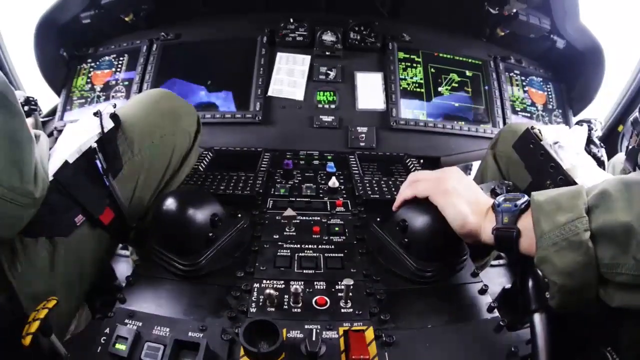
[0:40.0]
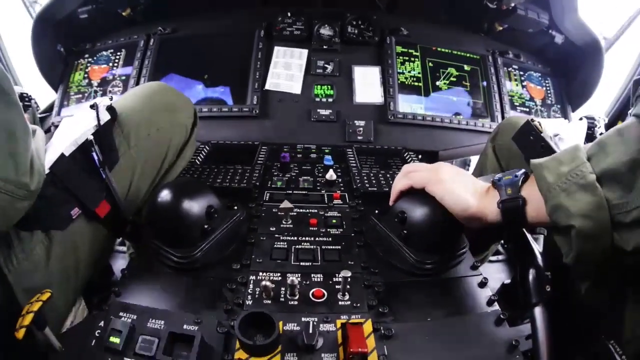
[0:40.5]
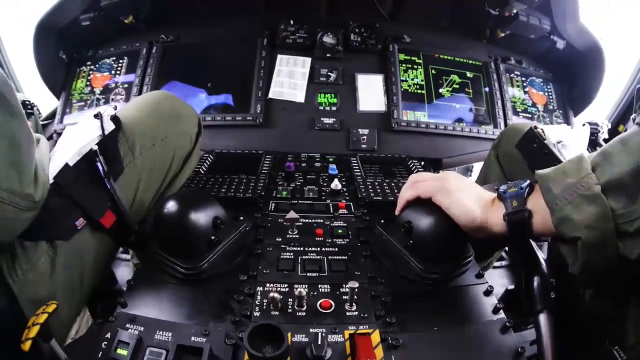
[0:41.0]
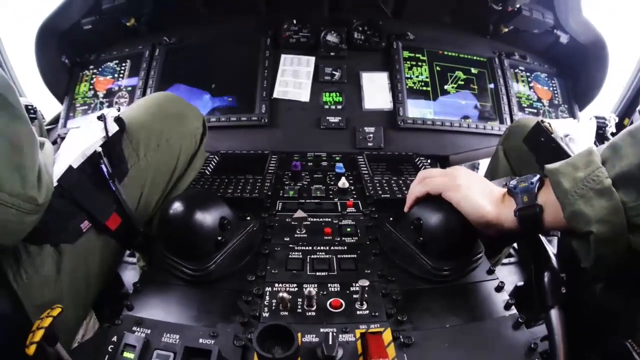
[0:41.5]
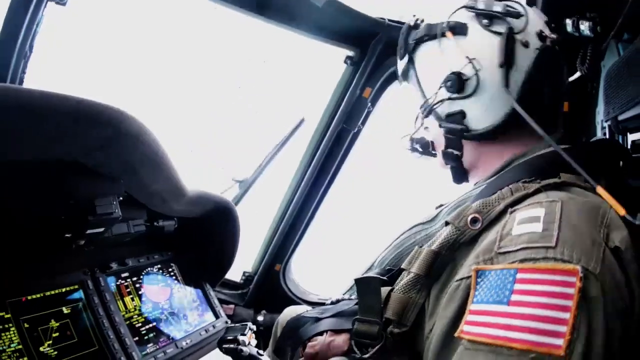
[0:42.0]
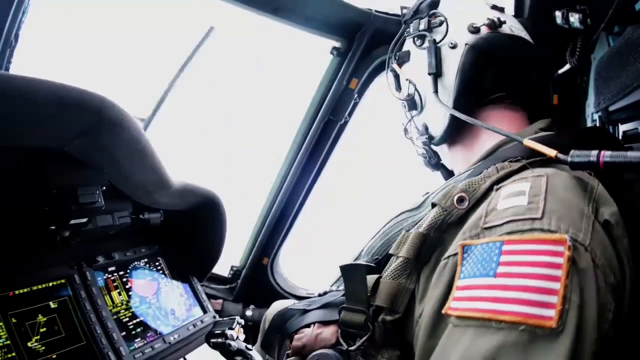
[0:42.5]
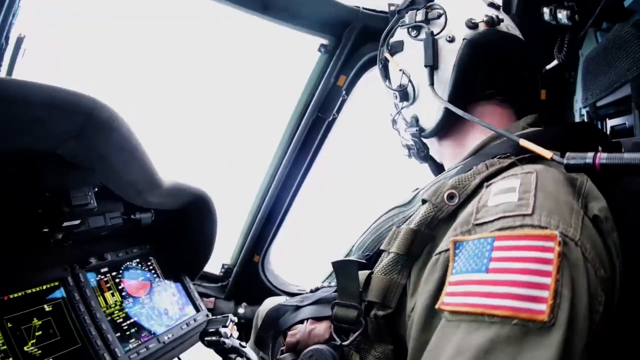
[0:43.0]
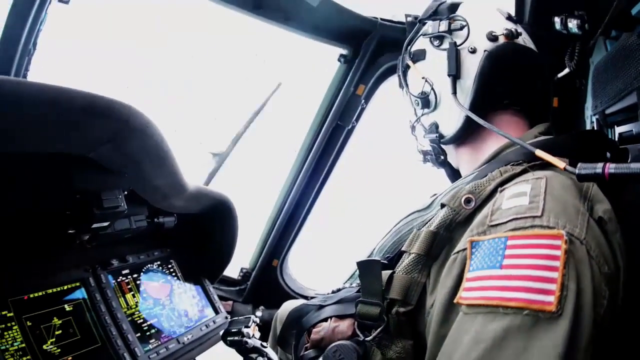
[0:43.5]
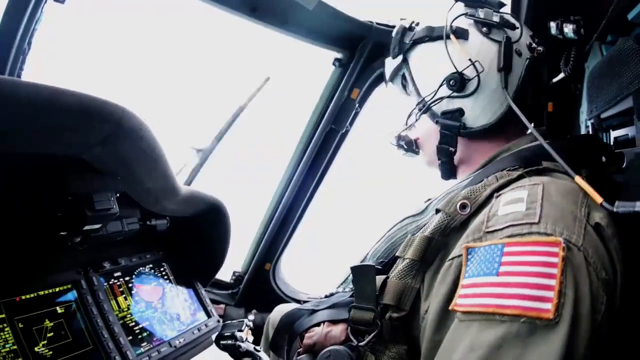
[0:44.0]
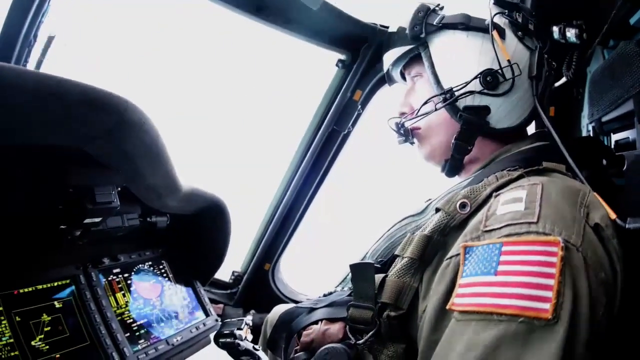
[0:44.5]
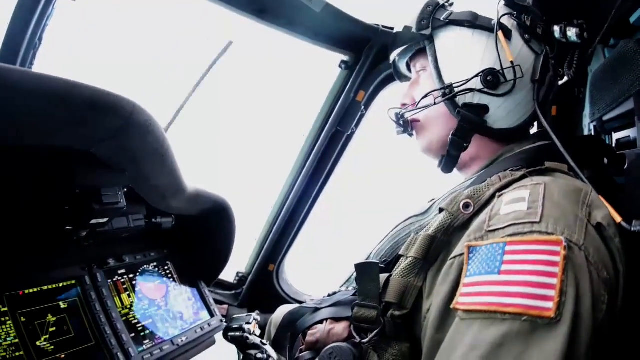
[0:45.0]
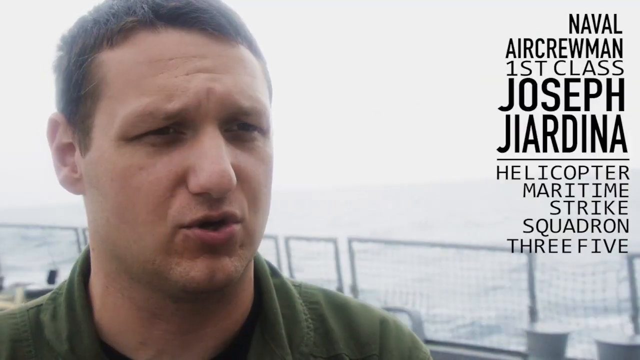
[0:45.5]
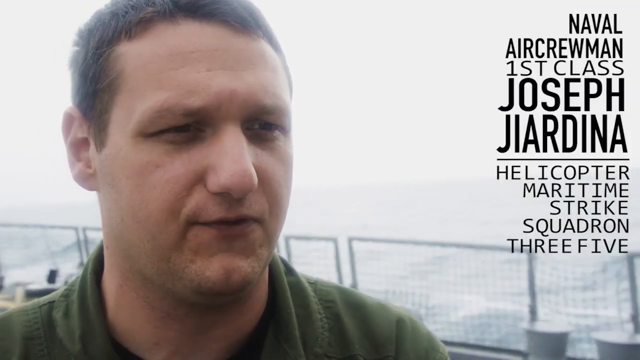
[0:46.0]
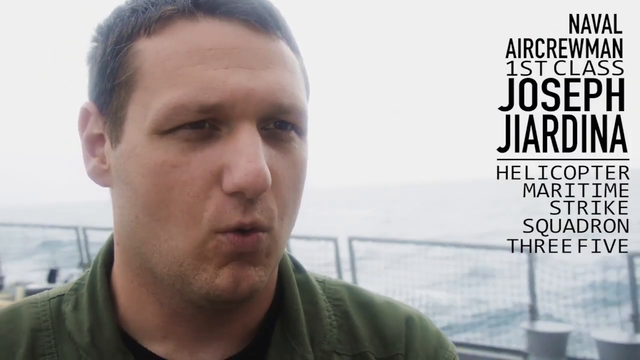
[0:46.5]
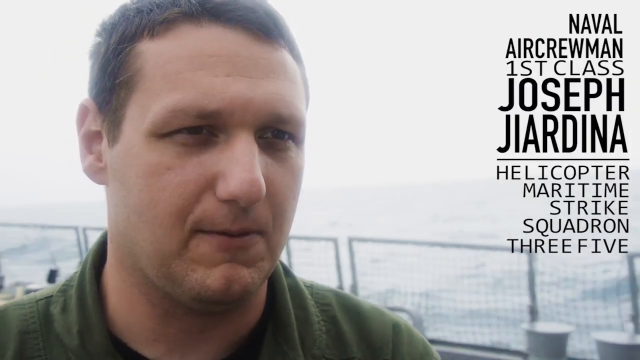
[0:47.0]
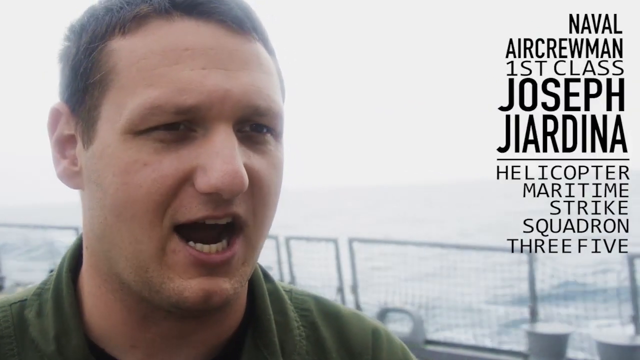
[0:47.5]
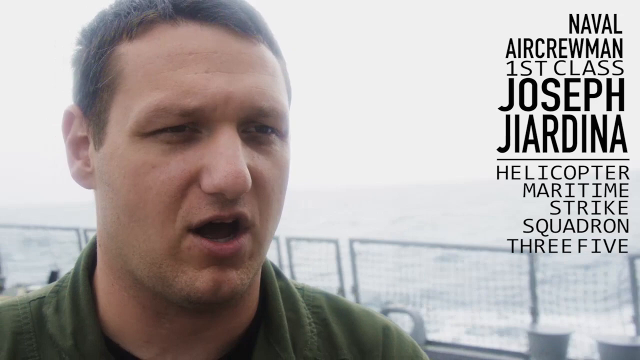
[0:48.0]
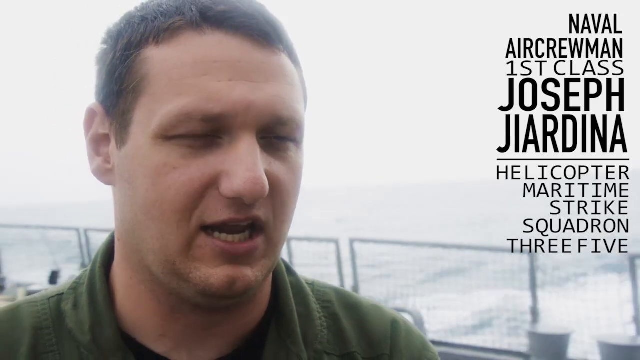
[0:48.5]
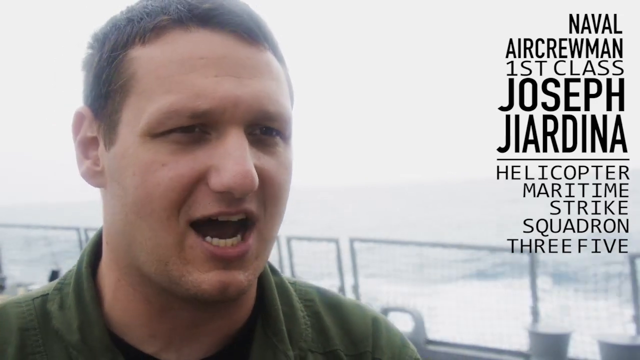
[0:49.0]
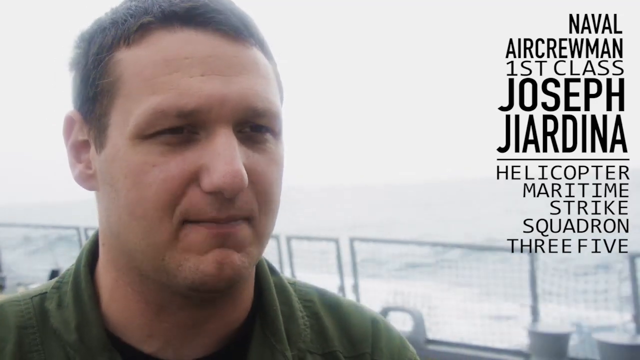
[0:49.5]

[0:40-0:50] The complete control panel of the helicopter is shown, with many levers, switches and buttons, many digital screens for the aircraft's navigation, and some radar systems. Two pilots from the U.S. military sit there, wearing white helmets and U.S. patches on their sleeves. The scene cuts to Naval Air Crewman First Class Joseph Giardina of Helicopter Maritime Strike Squadron 3-5, in a one-on-one interview on the battleship. It is a headshot interview showing only his head, and he has a short buzz cut.